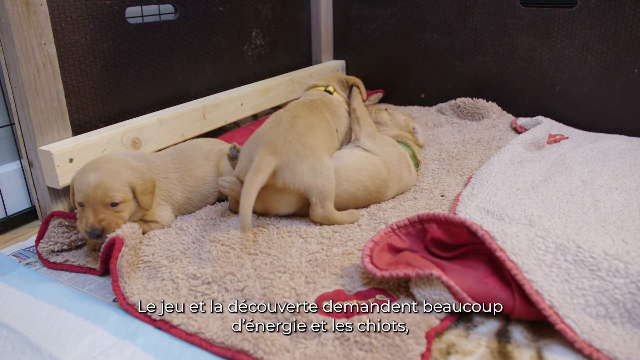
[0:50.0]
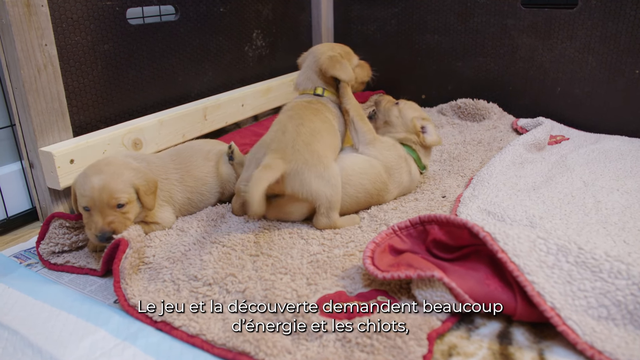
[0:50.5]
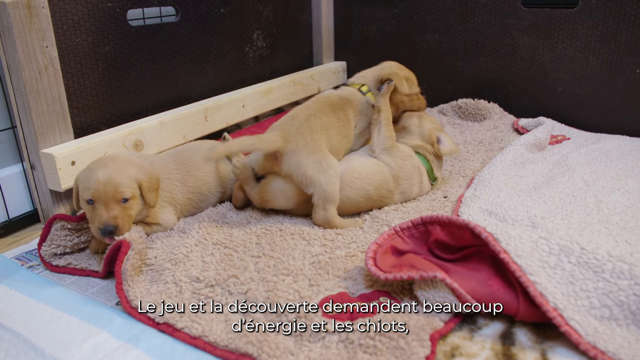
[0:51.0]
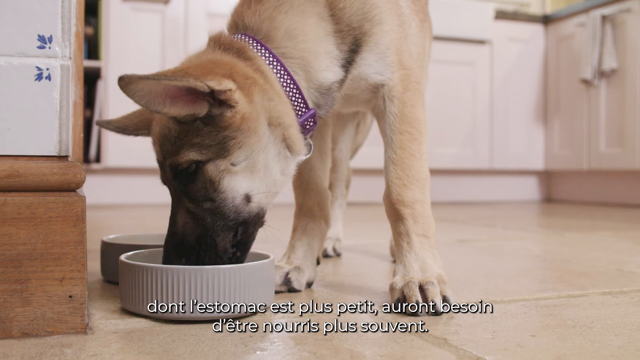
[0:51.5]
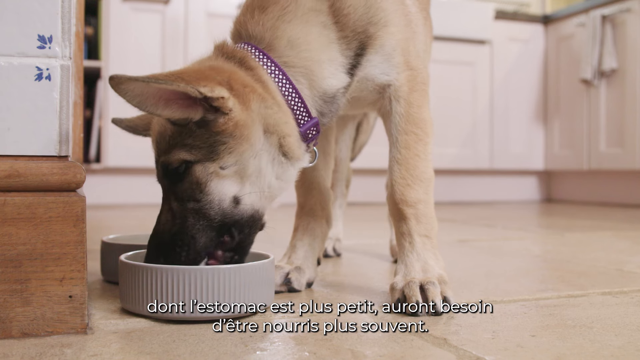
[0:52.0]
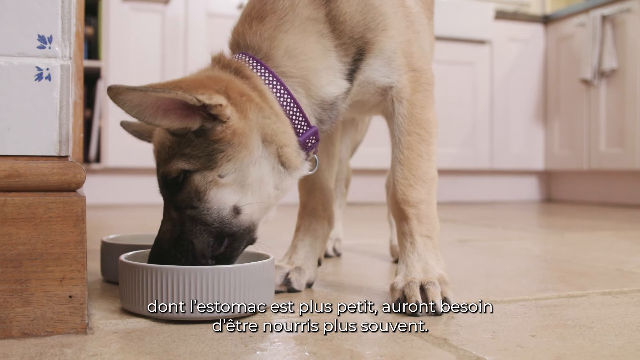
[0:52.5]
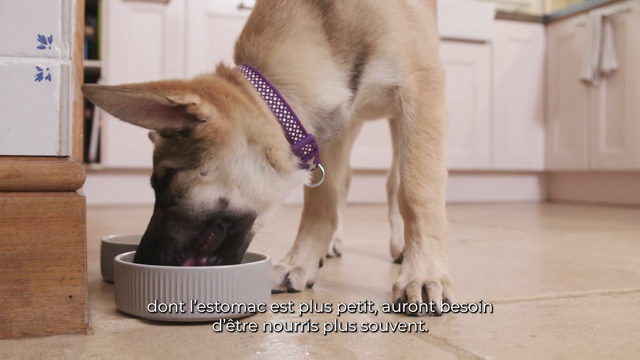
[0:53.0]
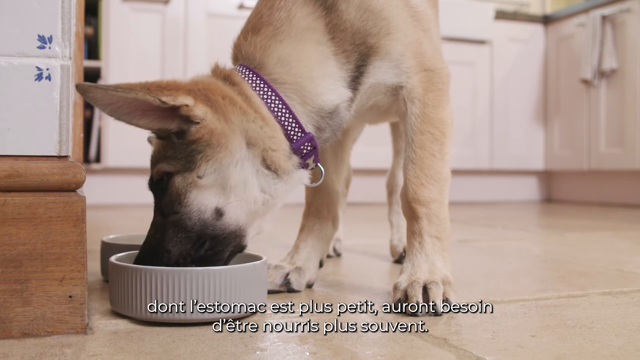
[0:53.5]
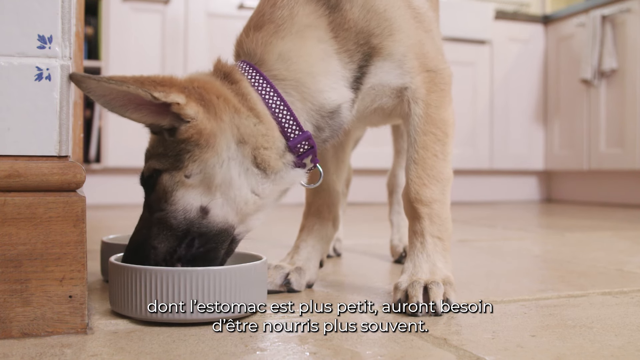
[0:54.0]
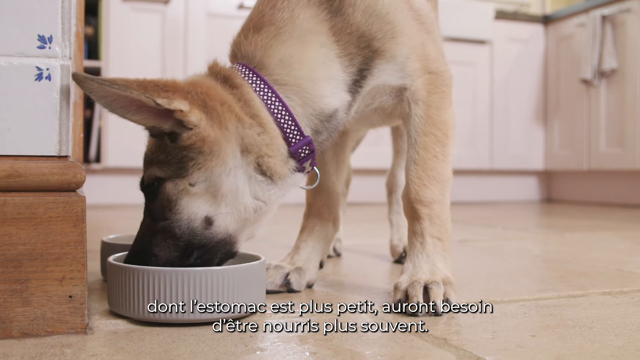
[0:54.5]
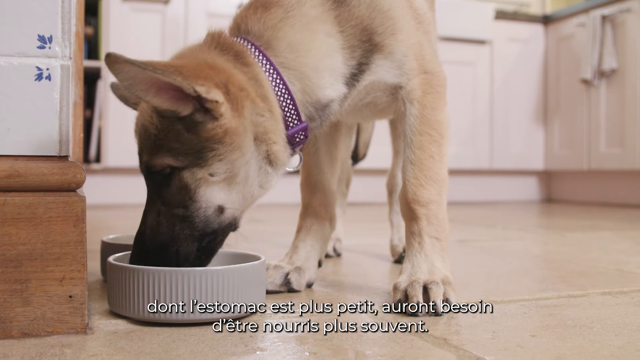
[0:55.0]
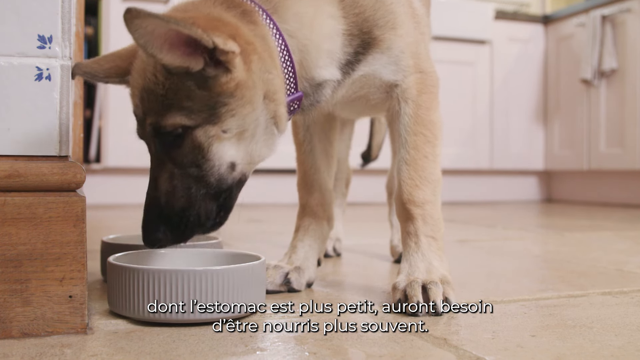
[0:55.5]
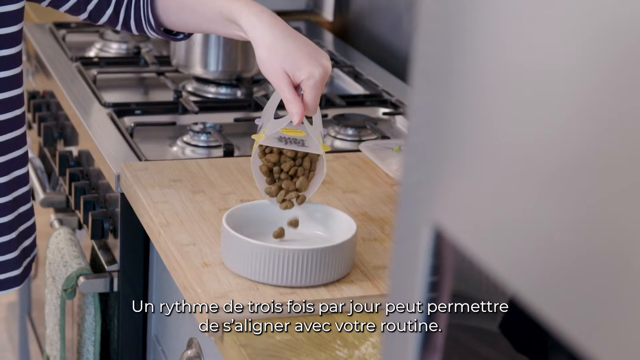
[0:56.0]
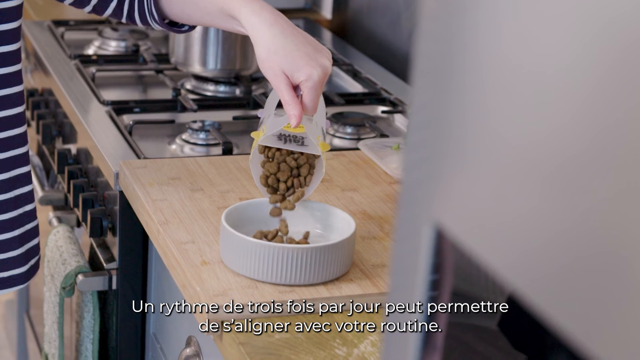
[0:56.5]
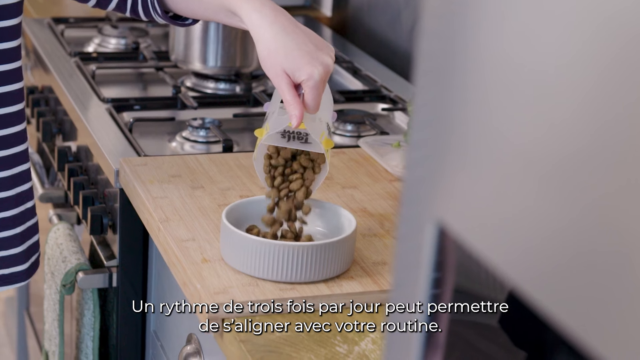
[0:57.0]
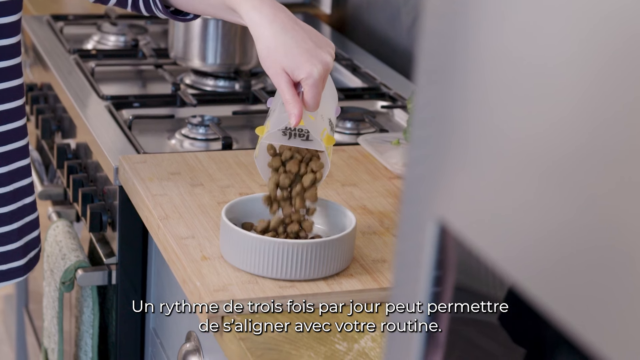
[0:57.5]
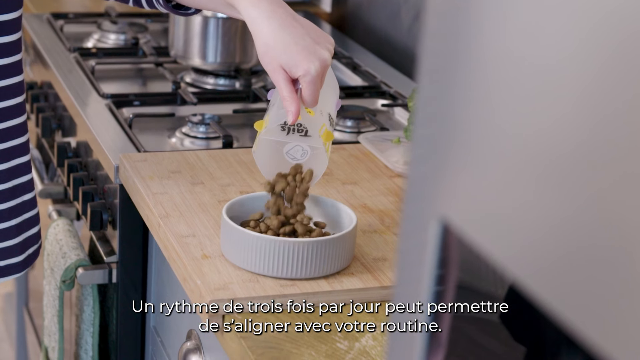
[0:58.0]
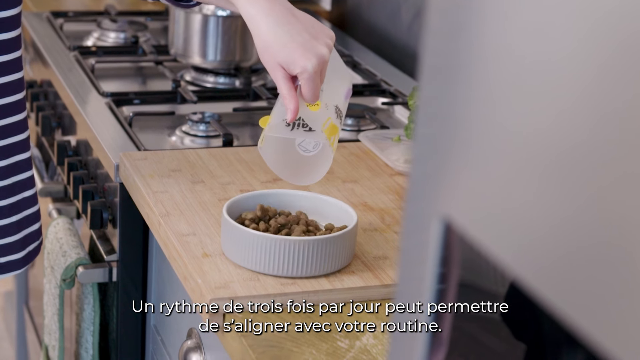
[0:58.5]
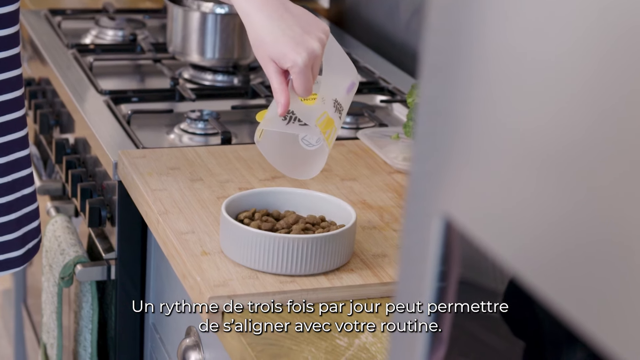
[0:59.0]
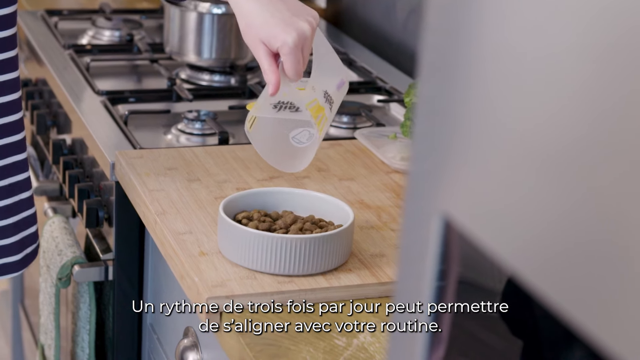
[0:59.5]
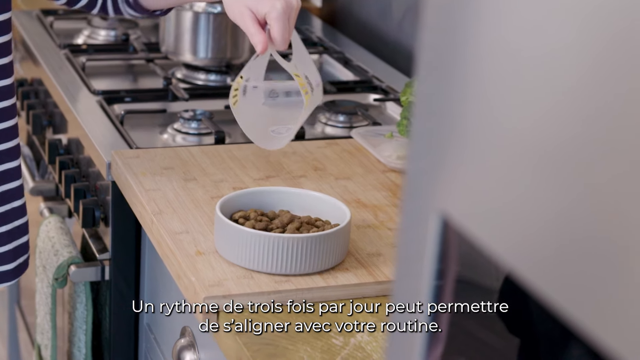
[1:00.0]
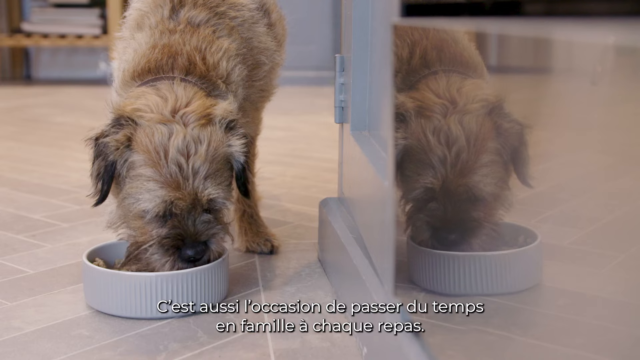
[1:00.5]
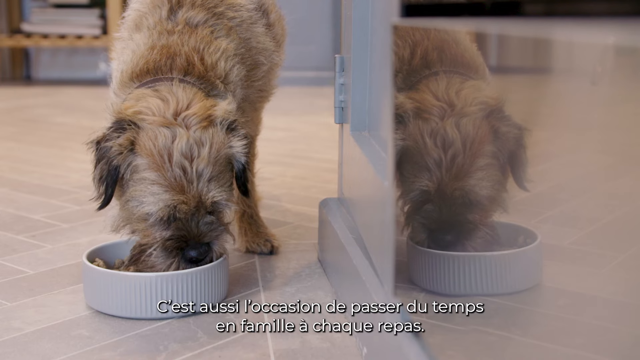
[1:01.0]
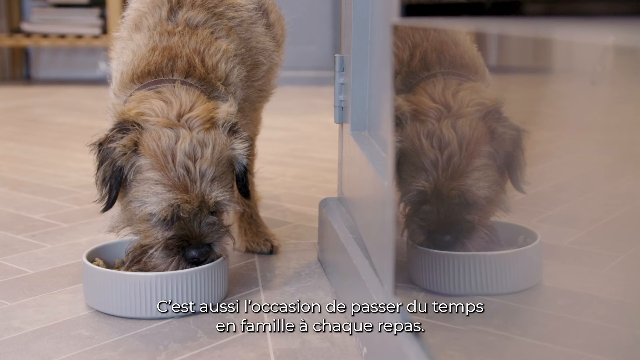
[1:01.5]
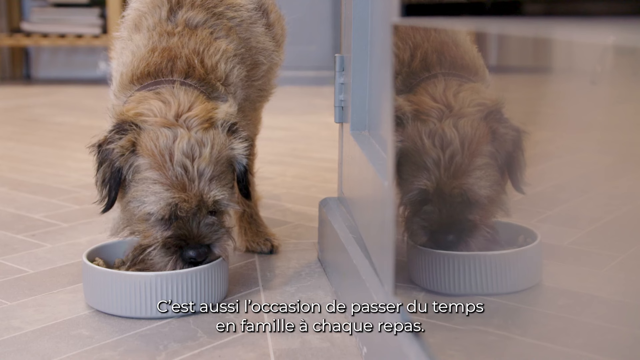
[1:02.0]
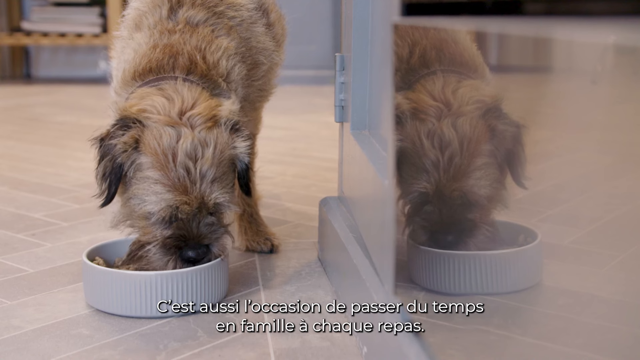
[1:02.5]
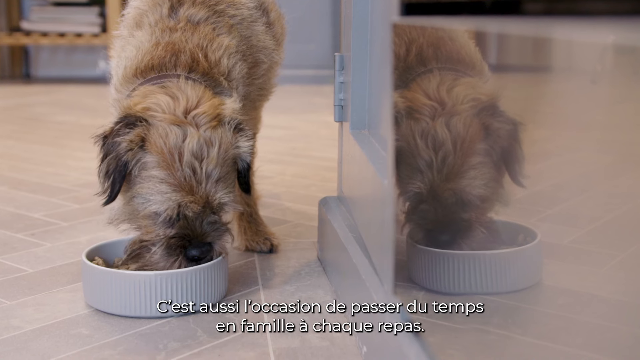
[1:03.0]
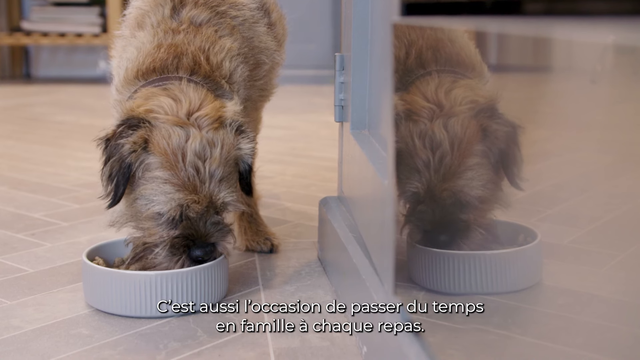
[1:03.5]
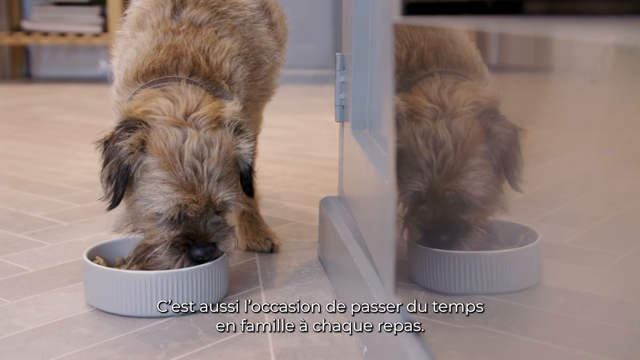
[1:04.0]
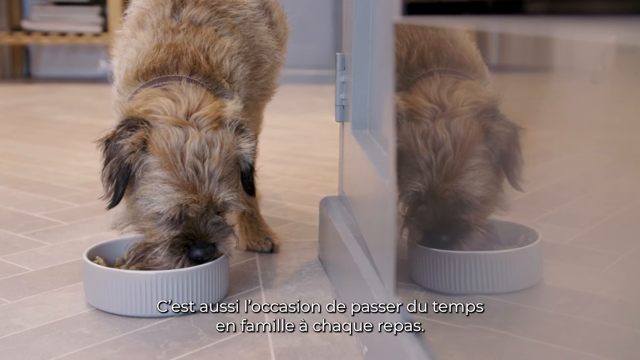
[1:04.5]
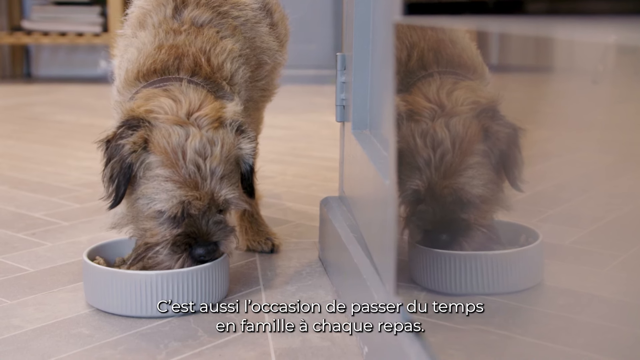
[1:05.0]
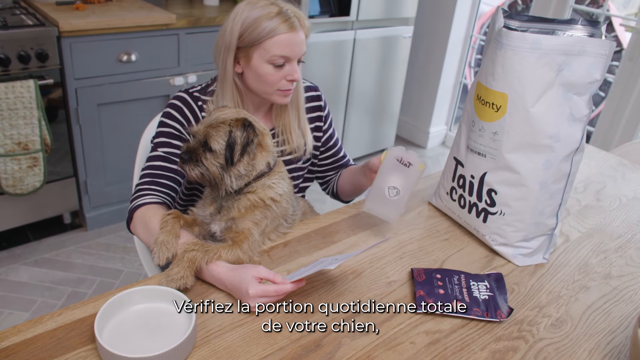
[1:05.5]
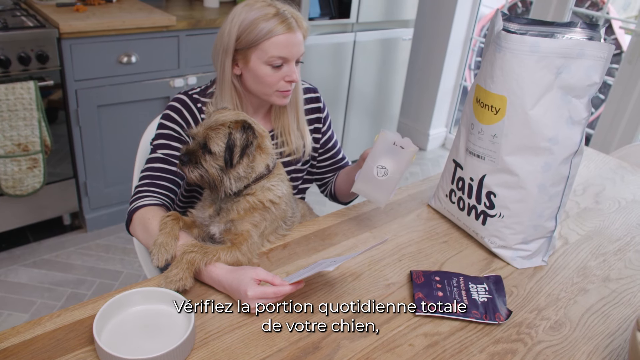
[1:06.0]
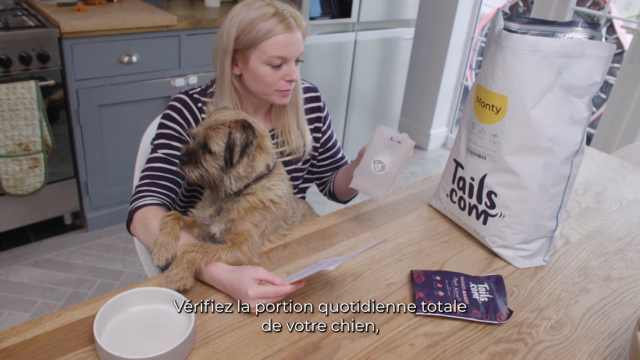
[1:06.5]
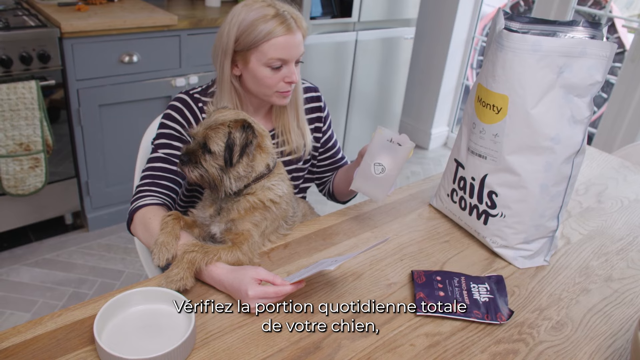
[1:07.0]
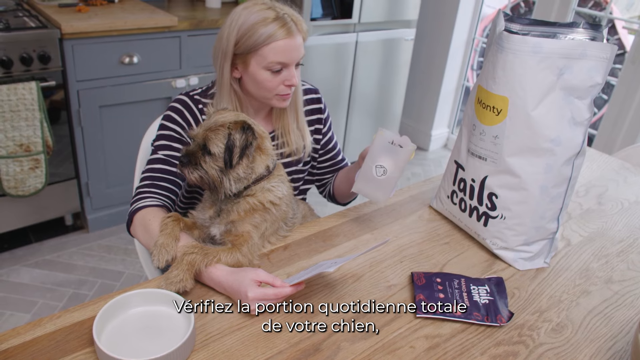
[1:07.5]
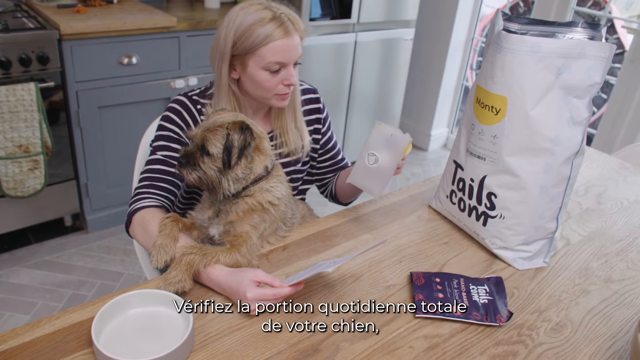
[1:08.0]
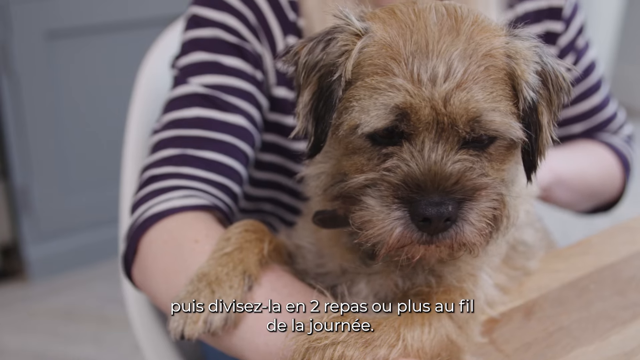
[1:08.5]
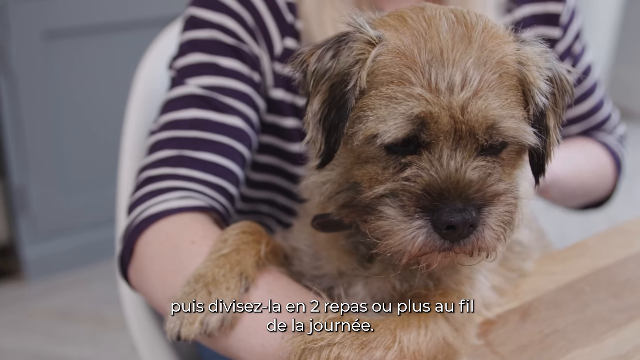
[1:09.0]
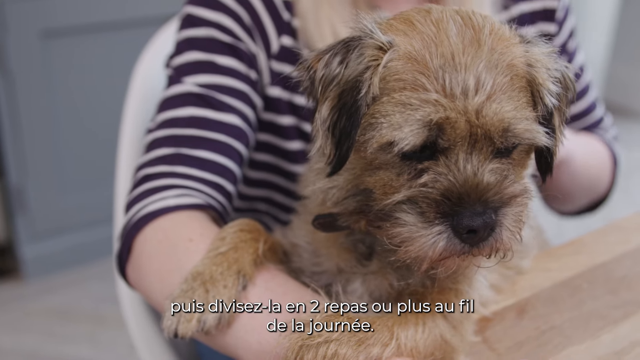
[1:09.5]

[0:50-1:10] Three golden-coloured puppies, probably five or six weeks old, play together on a soft blanketed area. The footage then changes to a German Shepherd type dog with a purple collar in a kitchen, eating food from a white ceramic dog bowl on the floor. Next, the white dog bowl is on a kitchen worktop area and somebody pours brown dry dog food biscuits from a plastic jug into it. The scene changes to a different, smaller and scruffier light brown dog in a kitchen area, eating from a white dog bowl that has been placed on the kitchen floor. Then a woman with blonde hair sits at a dining table with a small, scruffy, light brown dog sitting on her lap, its paws perched over her right arm. On the table is a large bag of dog food with "tails.com" written on it, and the woman holds a plastic jug in her hand. The camera zooms in on the scruffy dog's face.